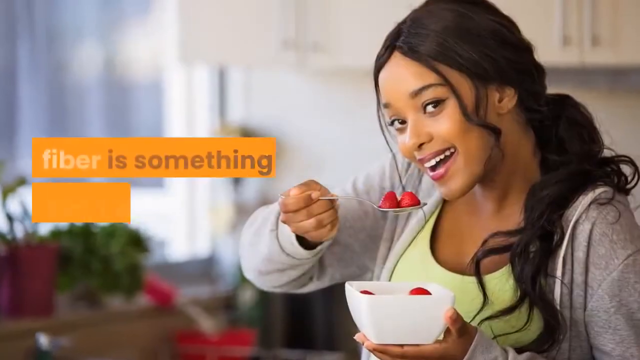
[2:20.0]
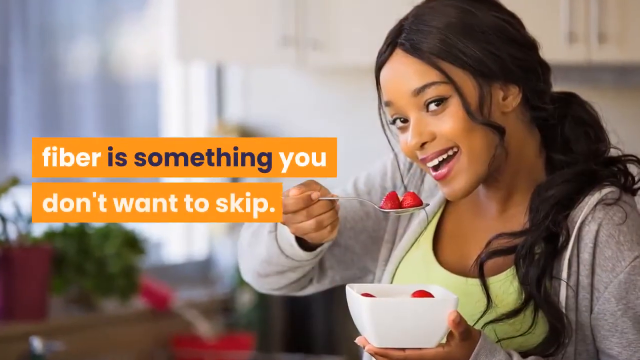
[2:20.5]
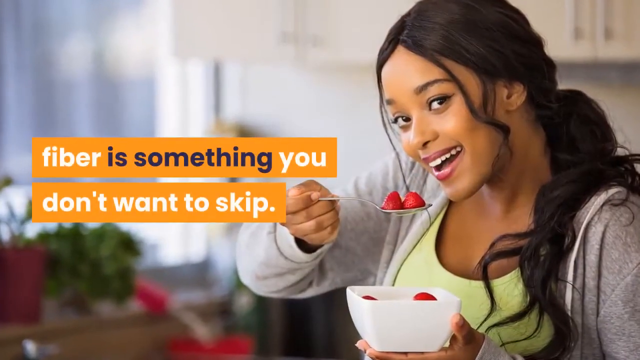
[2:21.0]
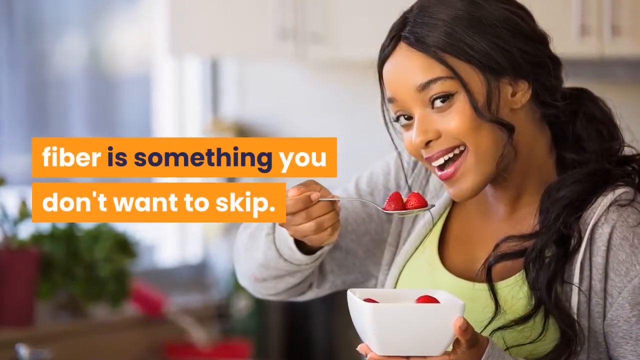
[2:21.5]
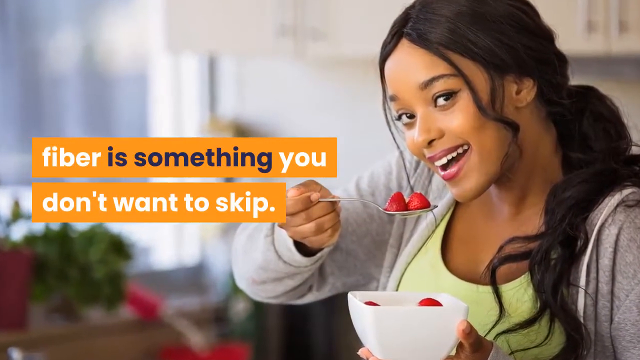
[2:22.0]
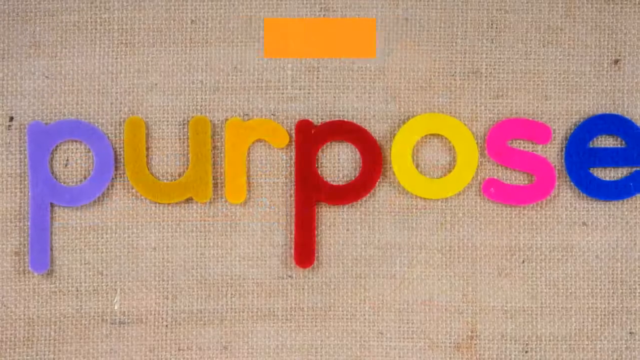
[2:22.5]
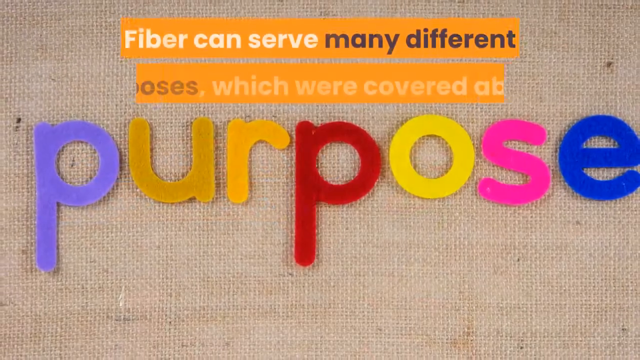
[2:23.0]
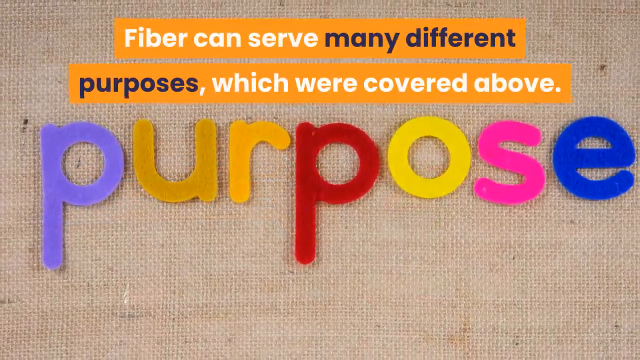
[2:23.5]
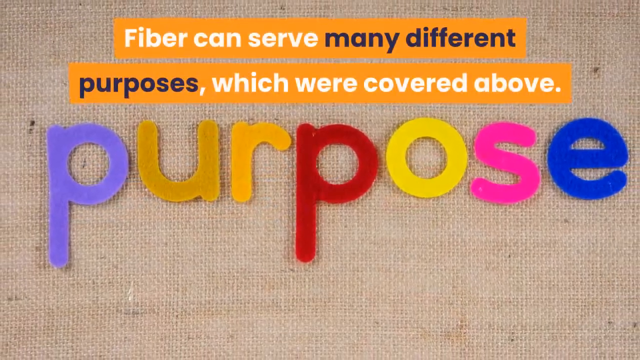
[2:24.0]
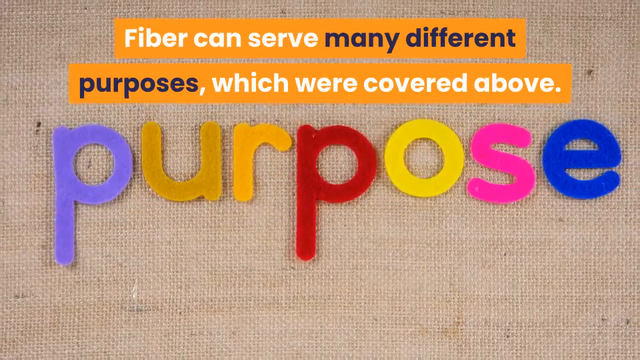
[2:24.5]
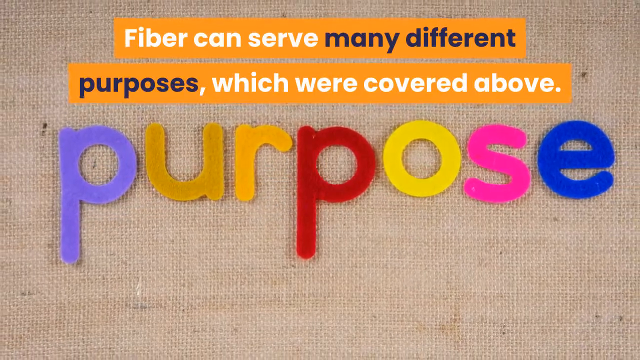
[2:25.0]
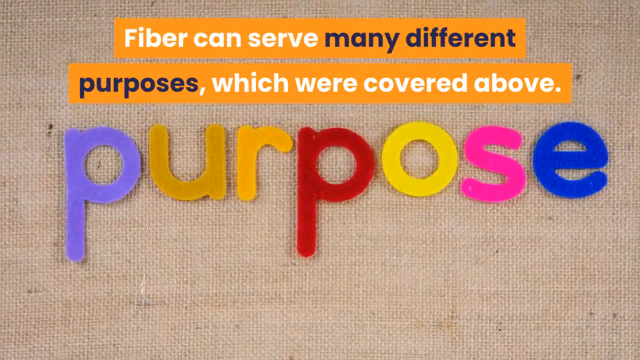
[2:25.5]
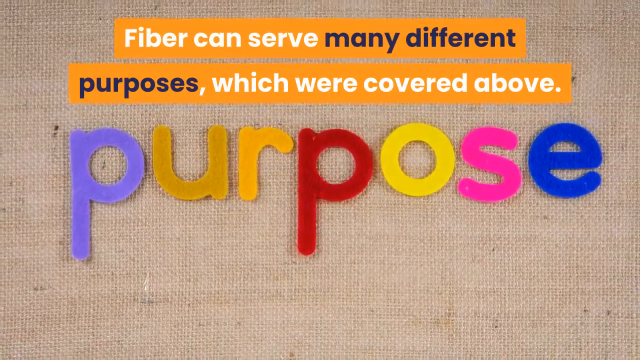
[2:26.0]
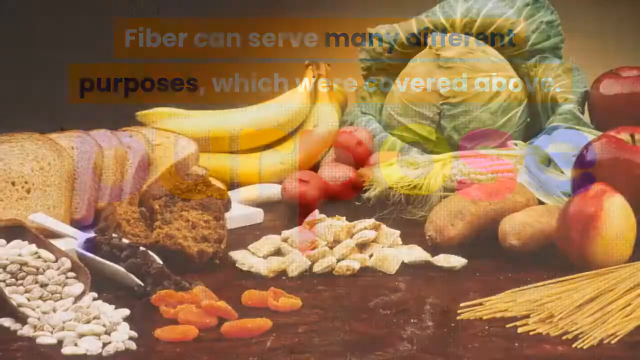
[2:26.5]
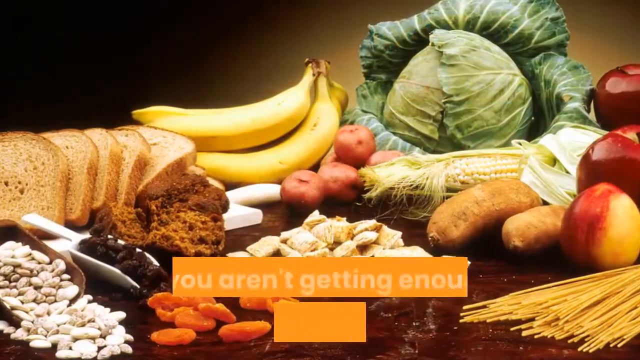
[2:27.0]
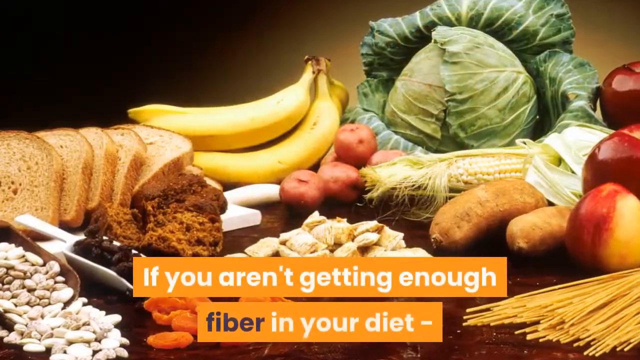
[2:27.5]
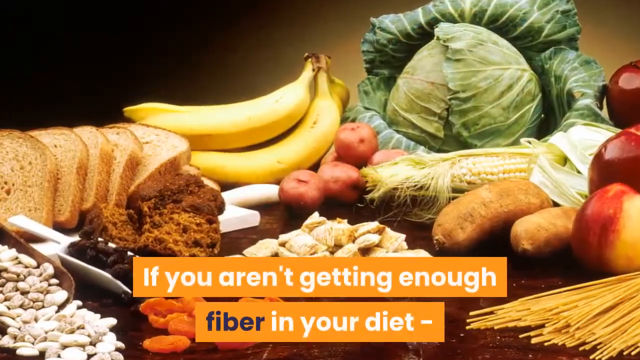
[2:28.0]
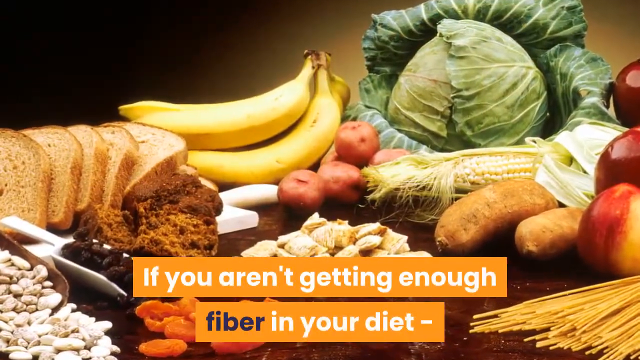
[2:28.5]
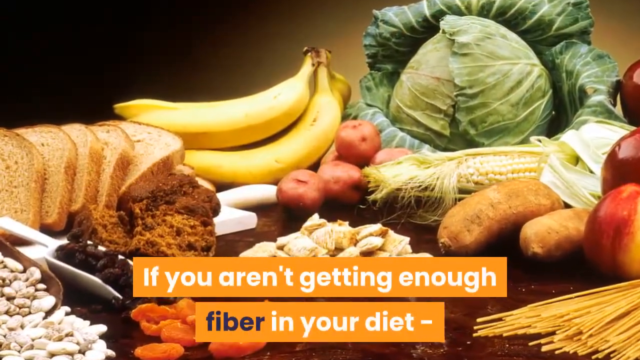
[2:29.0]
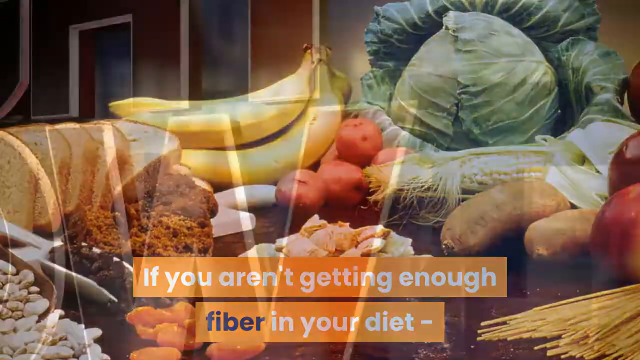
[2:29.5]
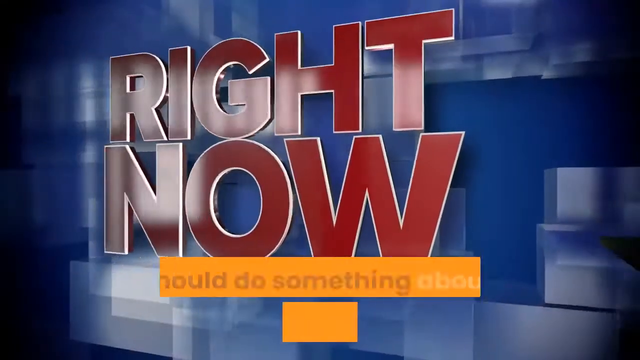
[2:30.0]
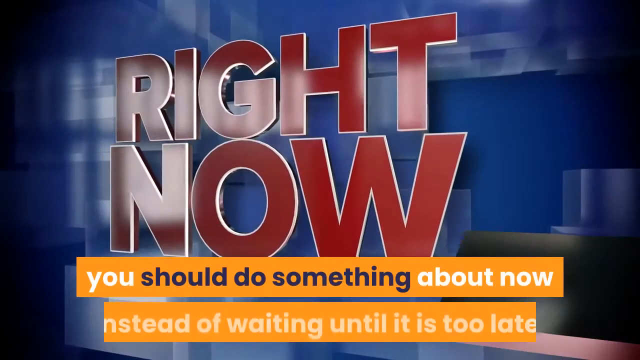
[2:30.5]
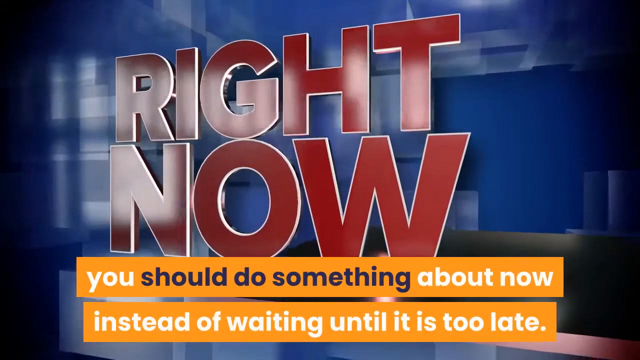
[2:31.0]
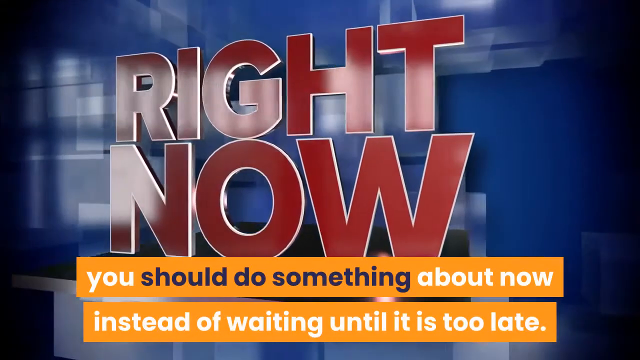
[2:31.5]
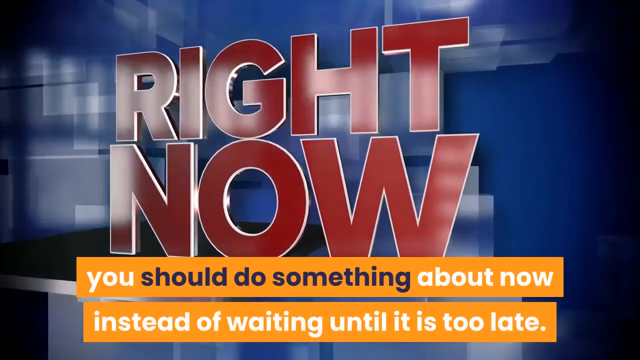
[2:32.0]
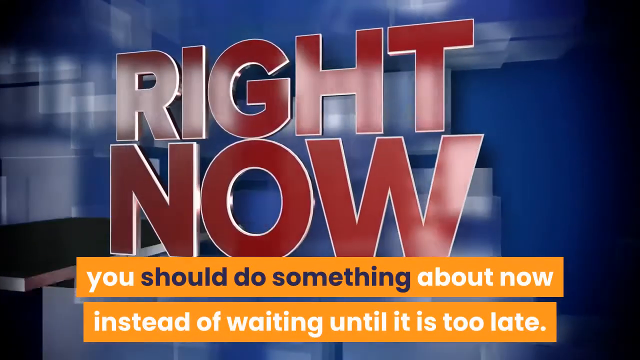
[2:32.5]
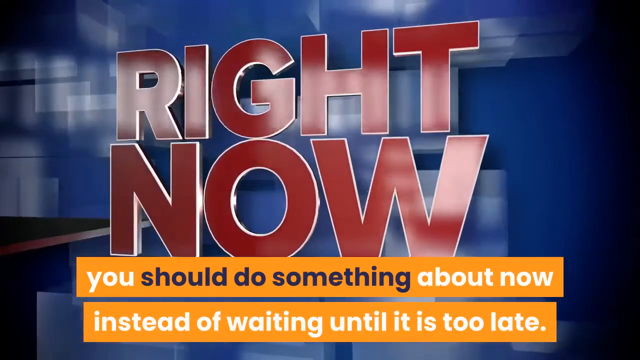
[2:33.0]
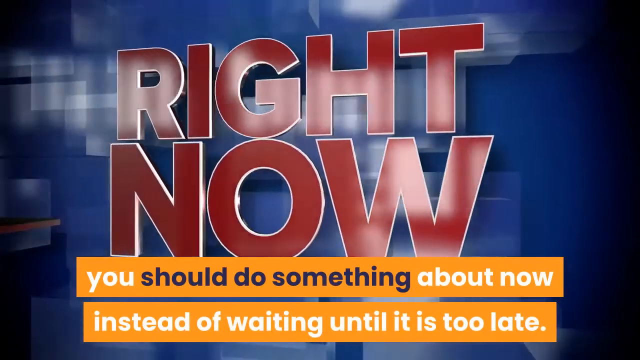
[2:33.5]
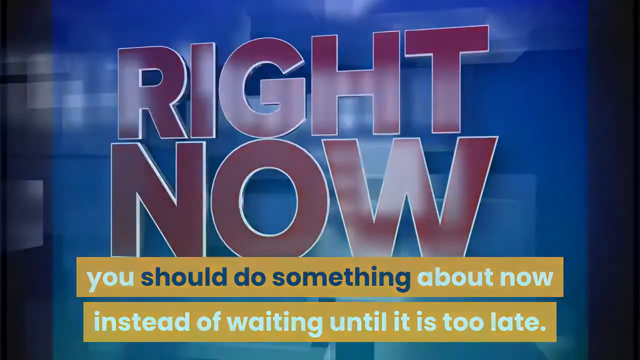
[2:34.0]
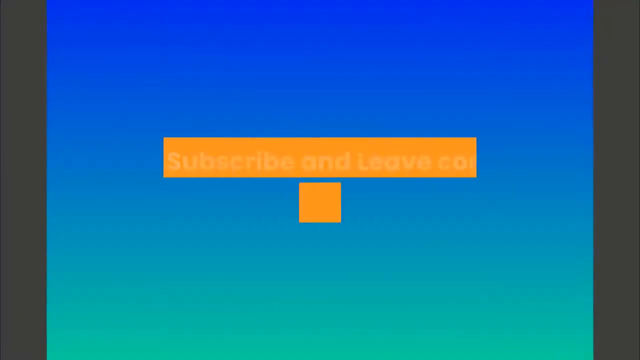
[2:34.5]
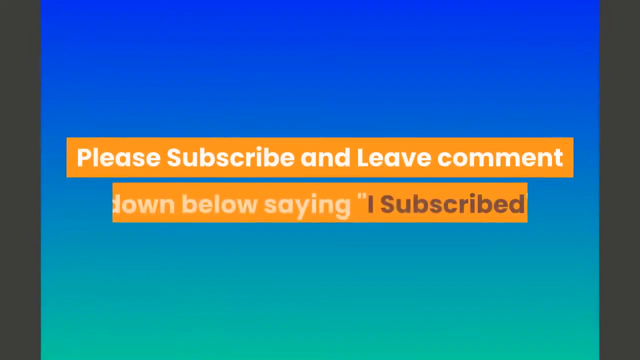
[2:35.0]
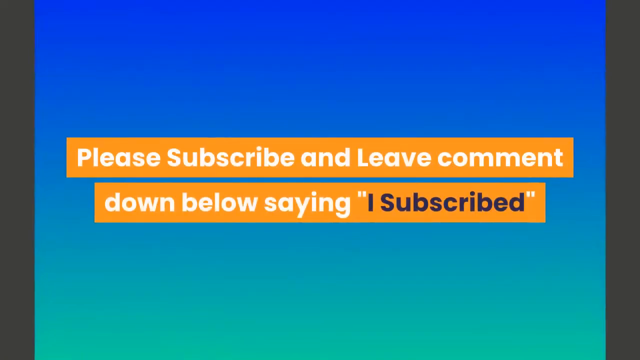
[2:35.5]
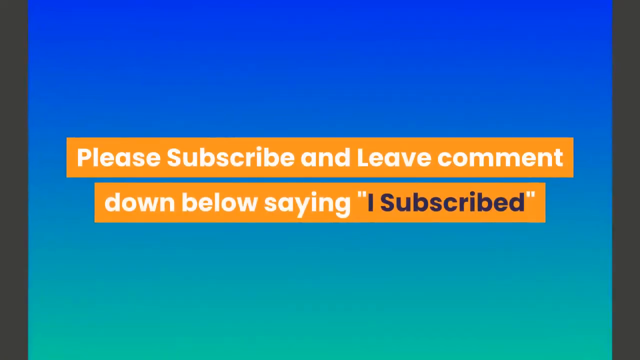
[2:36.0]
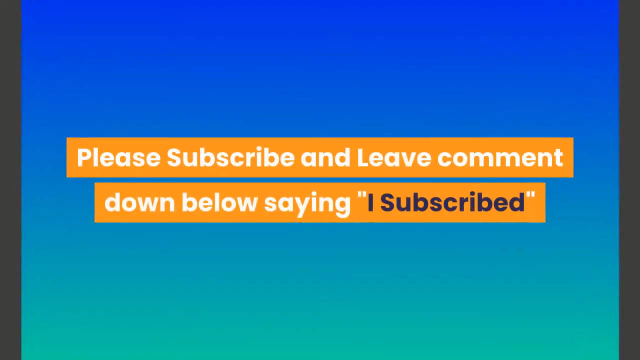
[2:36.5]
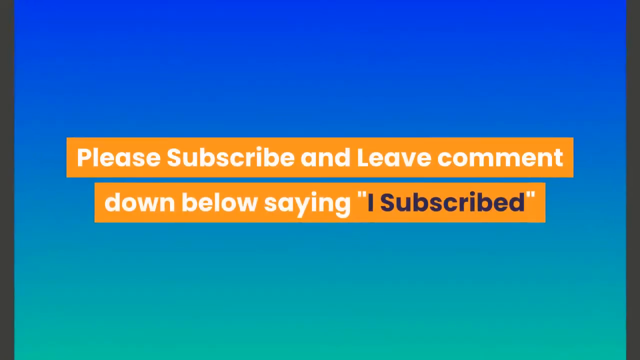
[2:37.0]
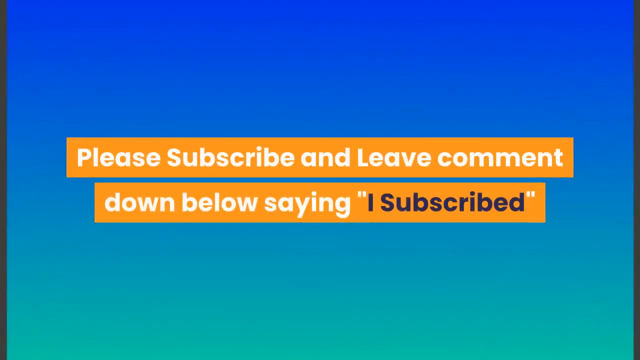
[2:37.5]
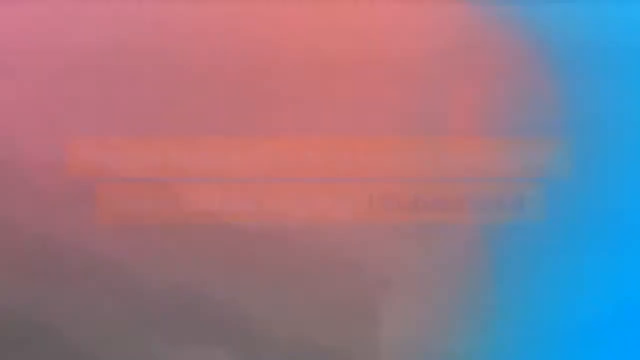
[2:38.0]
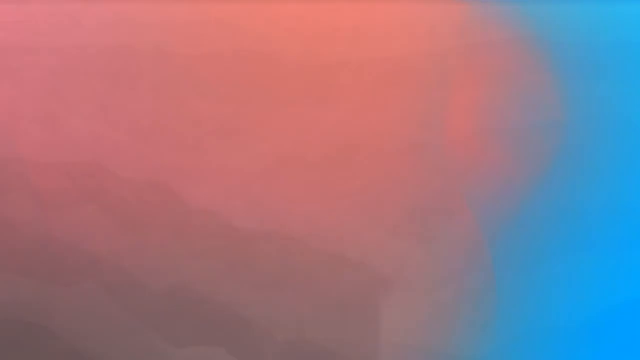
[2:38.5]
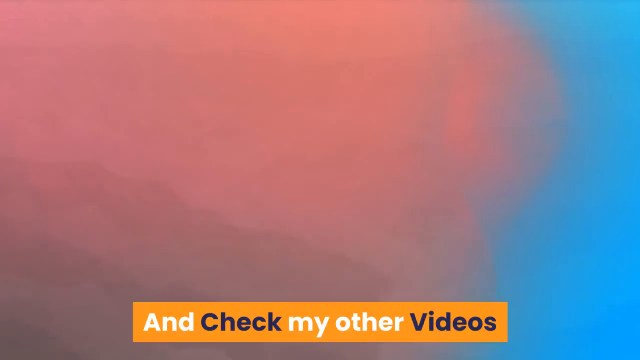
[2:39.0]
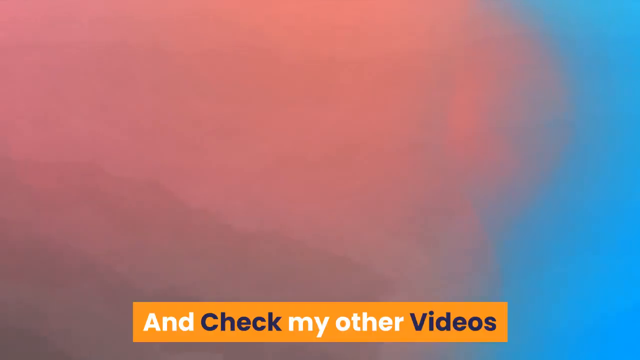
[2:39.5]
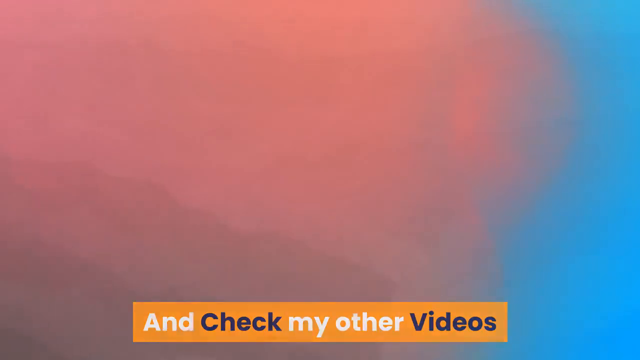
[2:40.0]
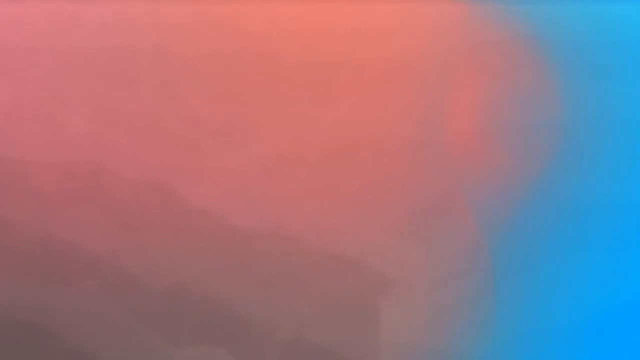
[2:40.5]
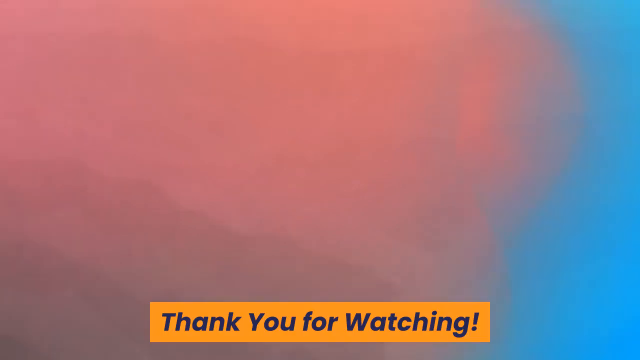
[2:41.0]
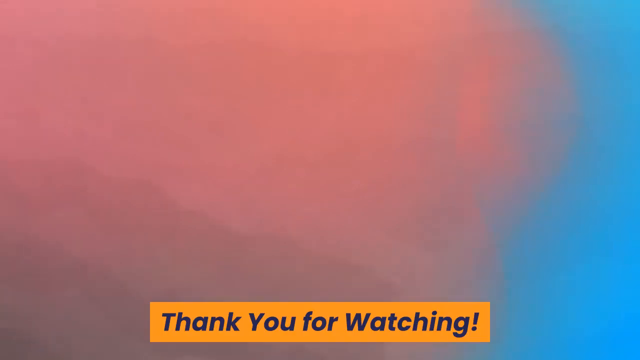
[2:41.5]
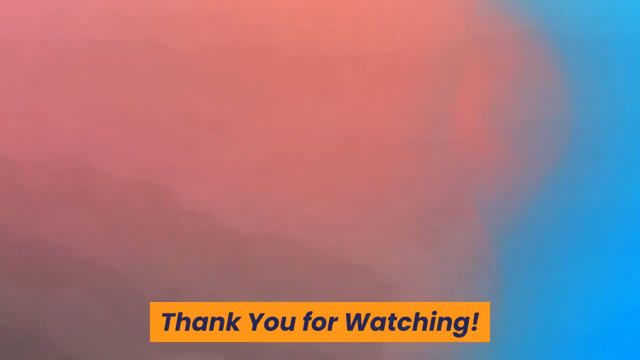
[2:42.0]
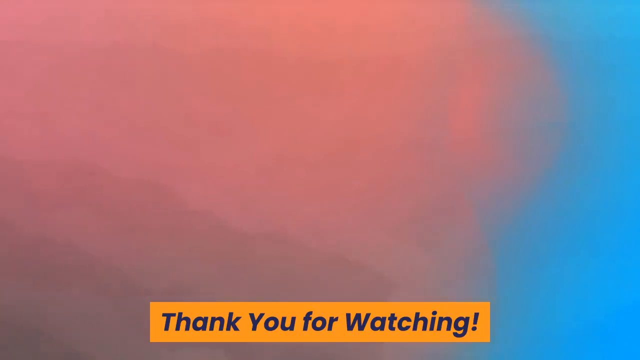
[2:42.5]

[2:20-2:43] A woman is eating from a bowl of fruit. The next screen reads "Fiber can serve many different purposes." Text then reads "If you aren't getting enough fiber in your diet, you should do something about that now instead of waiting until it's too late." At the end, the text reads "Please subscribe and leave a comment down below saying I subscribed."